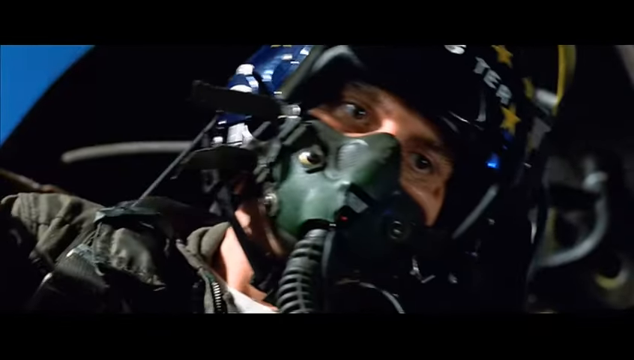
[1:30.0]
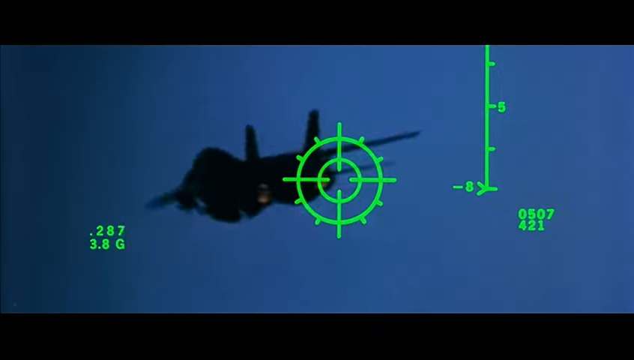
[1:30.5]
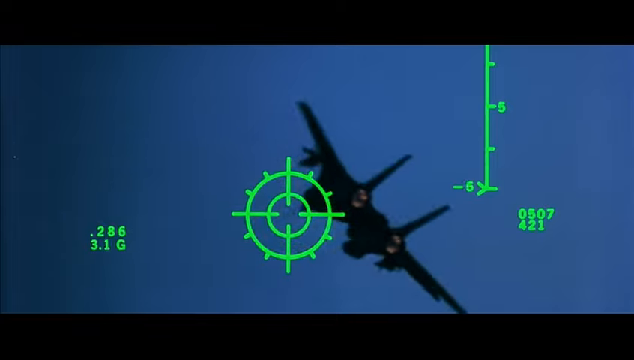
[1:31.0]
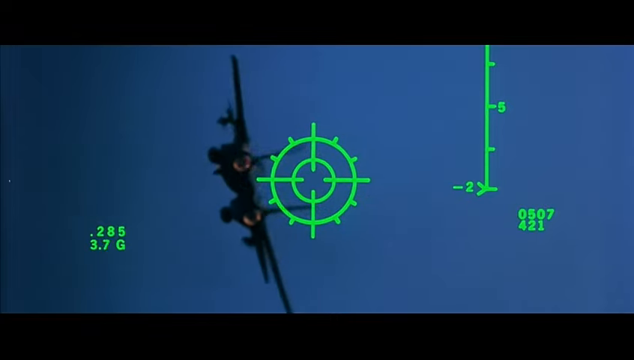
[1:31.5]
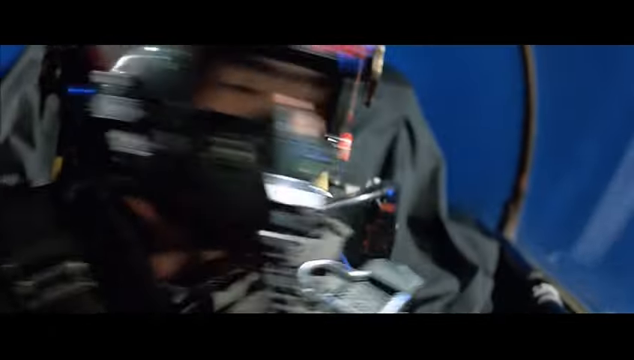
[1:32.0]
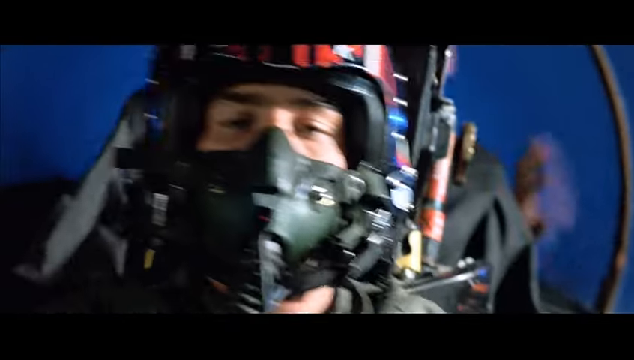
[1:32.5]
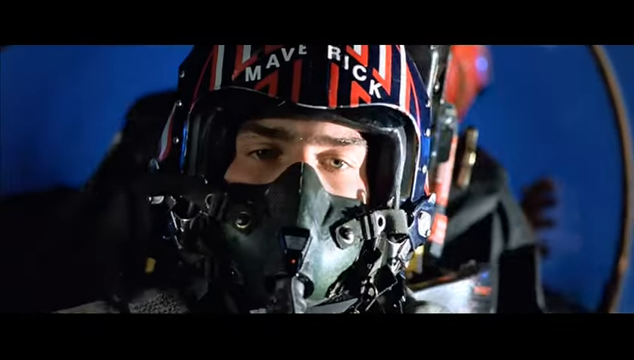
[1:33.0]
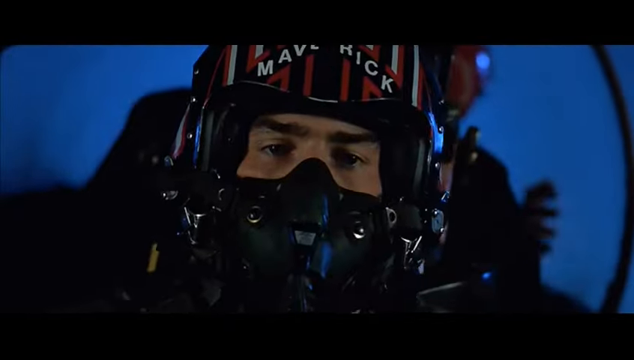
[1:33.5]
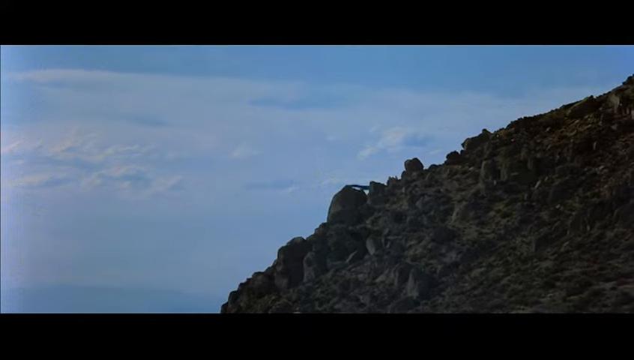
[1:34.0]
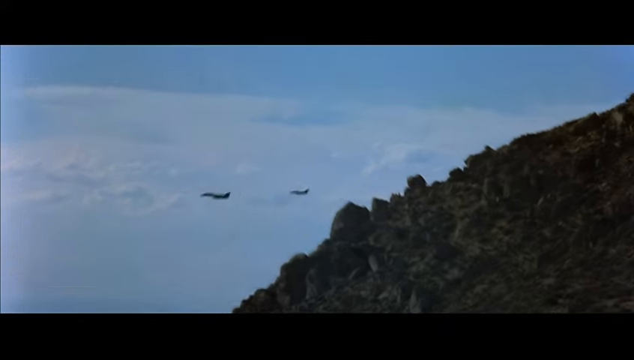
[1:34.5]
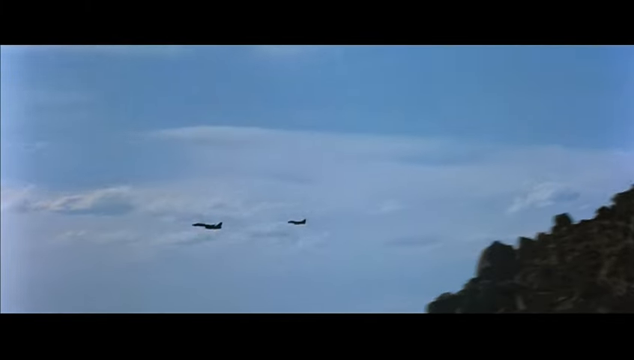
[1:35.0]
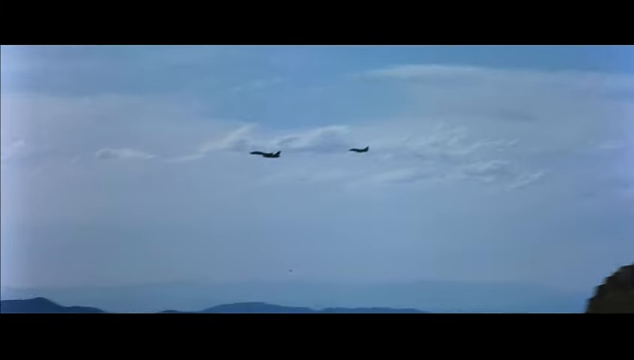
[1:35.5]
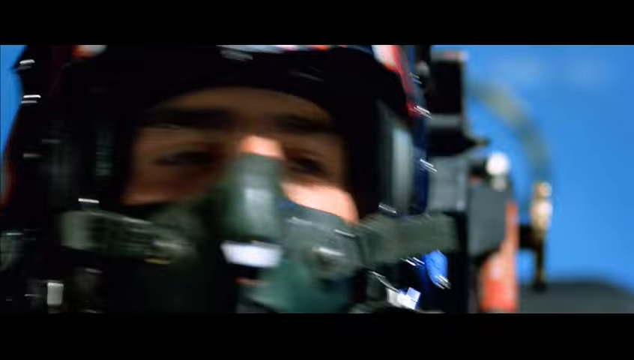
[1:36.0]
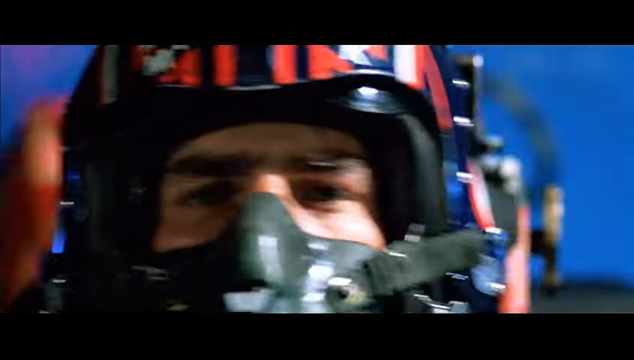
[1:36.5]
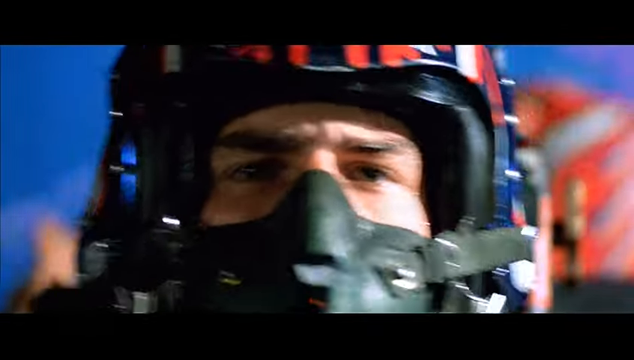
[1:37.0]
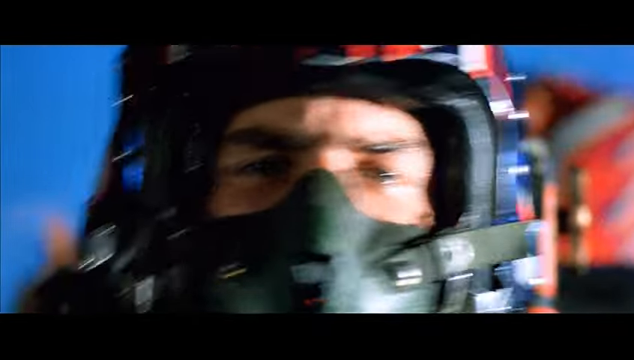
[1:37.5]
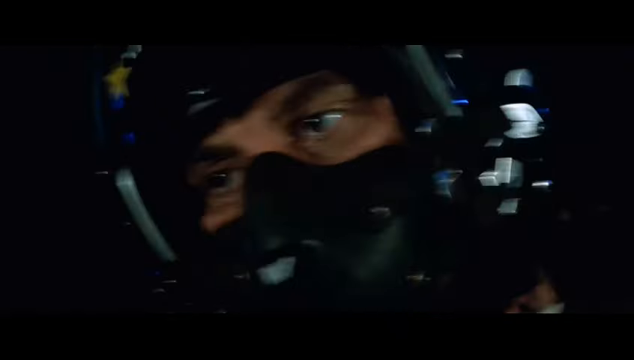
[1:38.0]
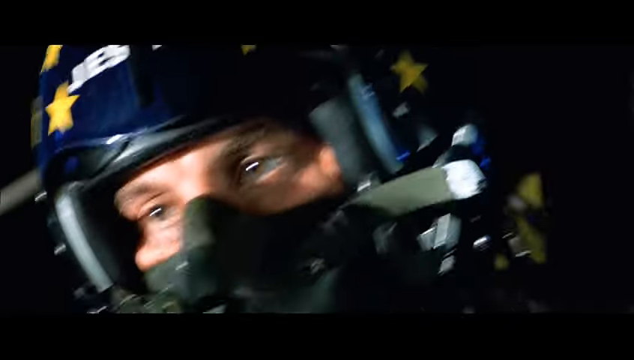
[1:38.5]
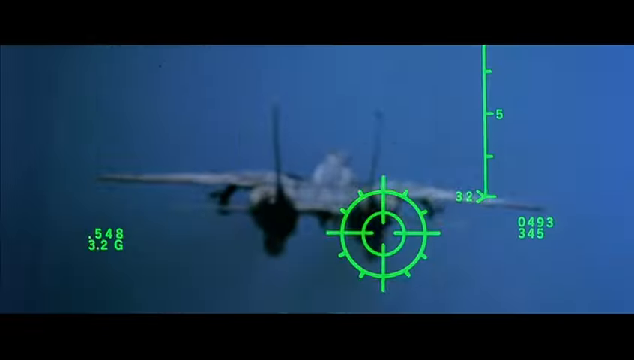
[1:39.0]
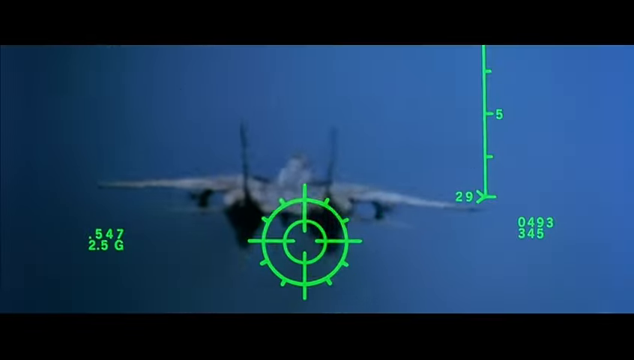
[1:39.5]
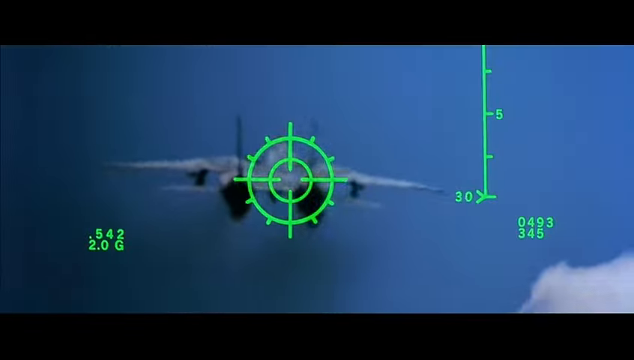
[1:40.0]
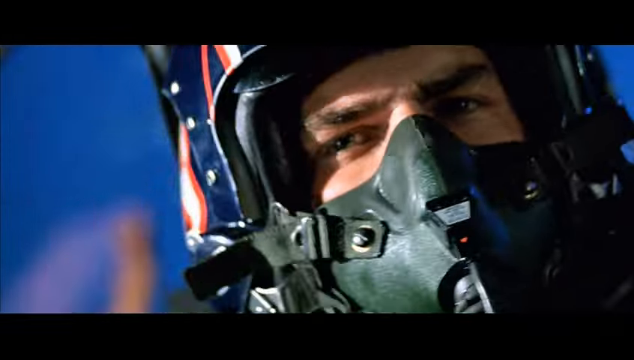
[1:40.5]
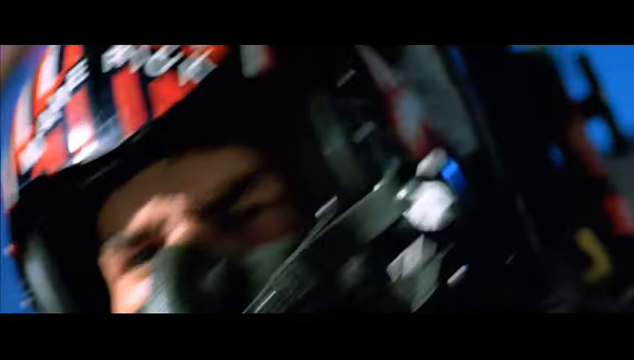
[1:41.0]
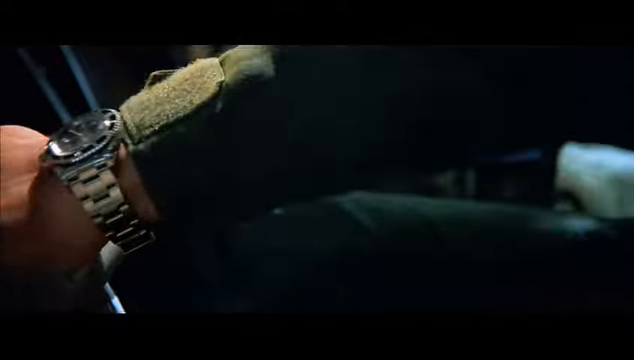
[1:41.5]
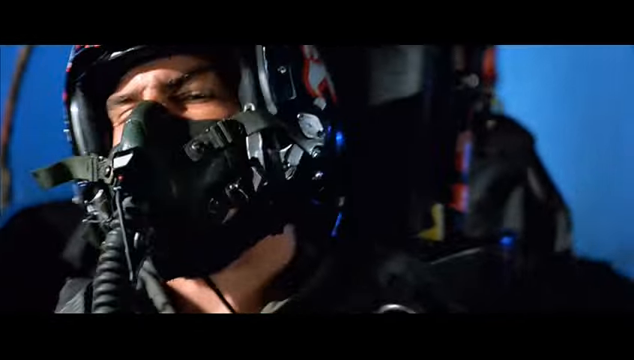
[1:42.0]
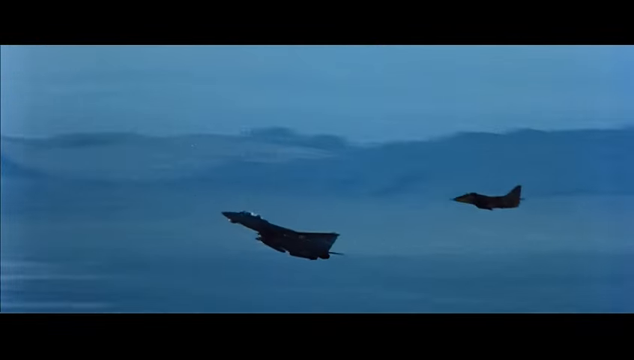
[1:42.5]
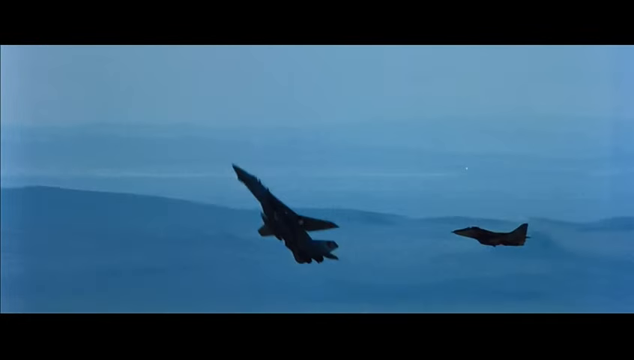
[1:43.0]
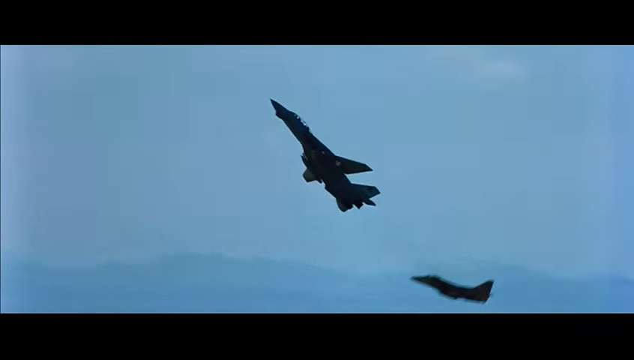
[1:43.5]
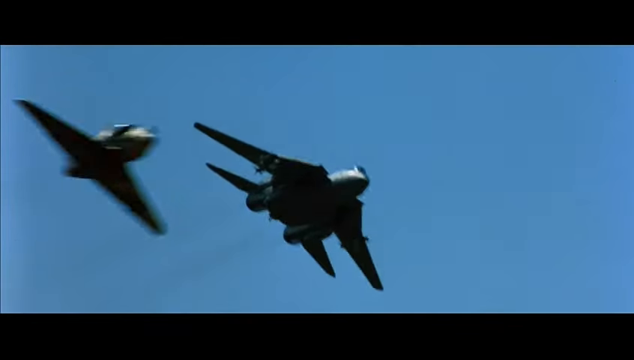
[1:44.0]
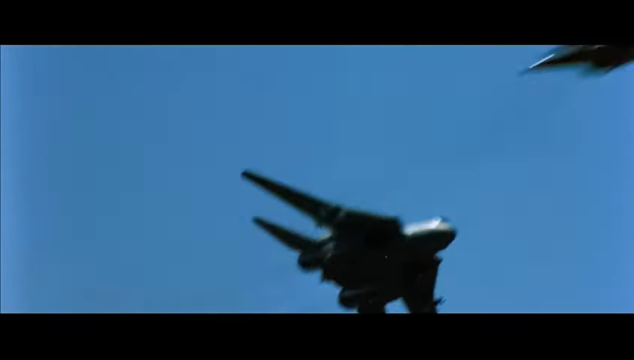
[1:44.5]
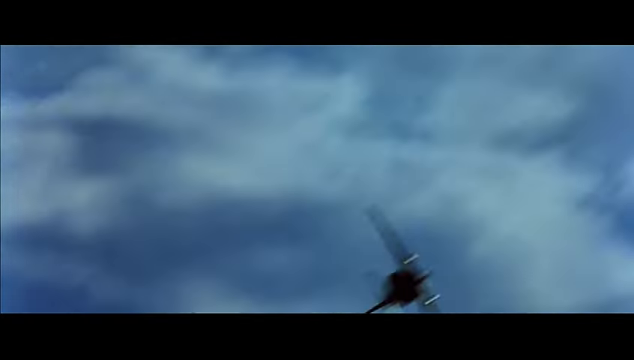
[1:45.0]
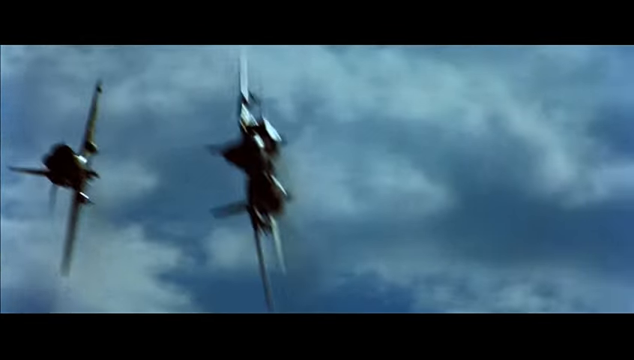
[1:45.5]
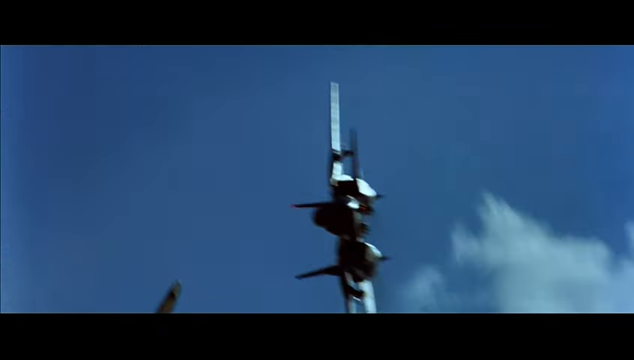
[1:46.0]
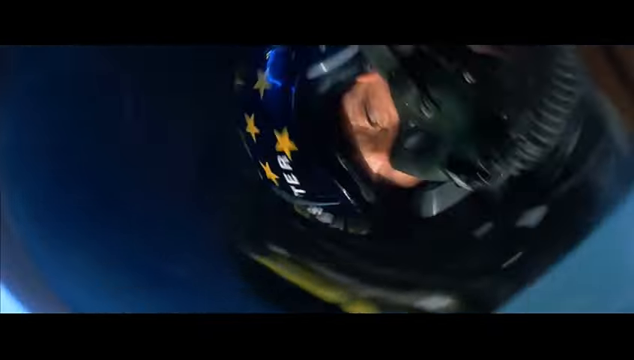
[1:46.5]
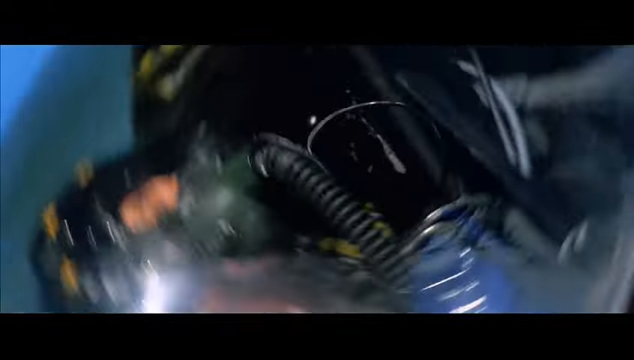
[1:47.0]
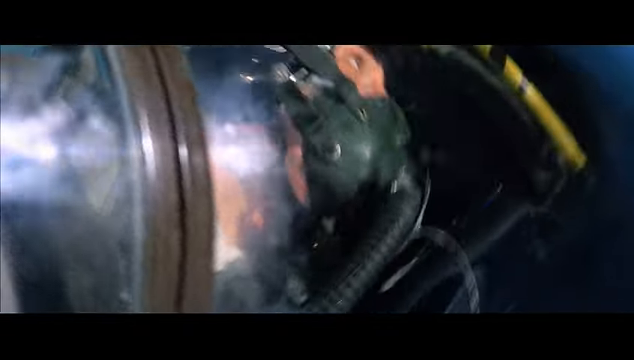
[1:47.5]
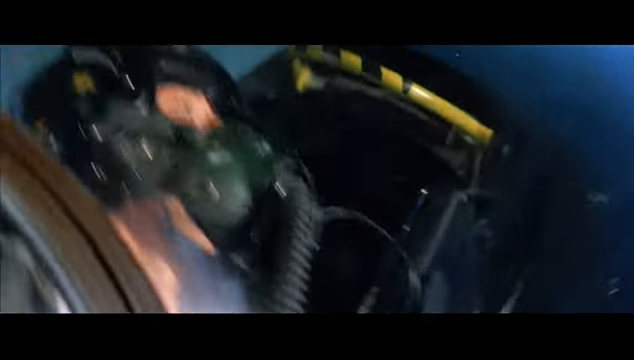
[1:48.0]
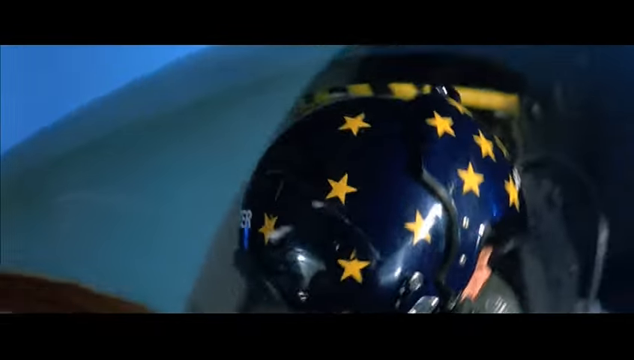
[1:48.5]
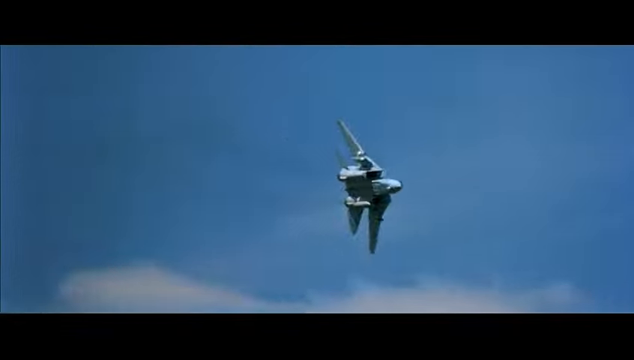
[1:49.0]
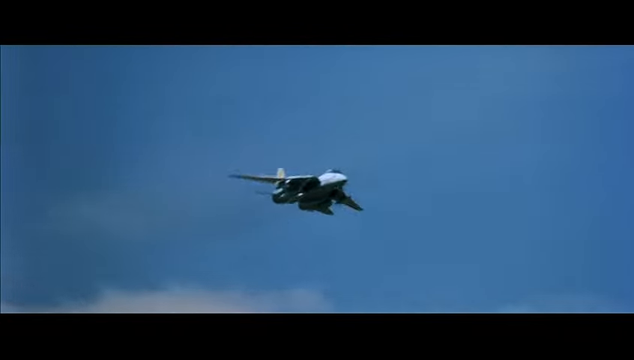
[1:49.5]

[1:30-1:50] Apparently from a pilot's point of view just before firing his weapon, a fighter jet is just left of the centre of the screen against a blue sky. Just to the left of the jet and a little lower is the text ".290", with "3.7G" underneath. At the tail of the jet, to the right, is a bright green target sign that seems to be zeroing in on the aircraft. On the right of the screen a vertical line has small lines, each about 5mm long, branching to the right; the second line down has a 5 next to it, and at the very bottom the line forks to the right with a minus 7 next to it. To the right of that, a little lower, are the numbers "0507" and underneath "421". All of these are bright green. The plane moves onto its side and the target moves to zero in on it again. A pilot in a cockpit wears a helmet with the word "Maverick" on it. From the ground looking up, the planes emerge from the right side of the screen as if coming out of a canyon and head straight to the left, with a cloudy white sky behind them. A pilot in a cockpit spins around very fast and talks to somebody. A jet fighter is shown with the target zeroed in on it from behind. After a cut back to the cockpit, the two planes fly side by side, then one moves a little further forward and starts to accelerate in an upright position. Both planes go onto their sides as if doing a barrel roll, and a shot inside a cockpit makes clear they are doing a barrel roll, with the pilot looking behind him.